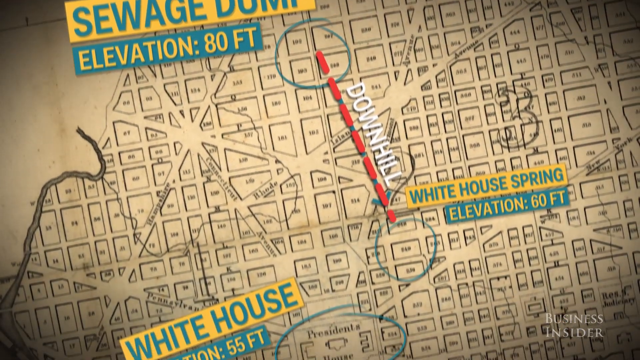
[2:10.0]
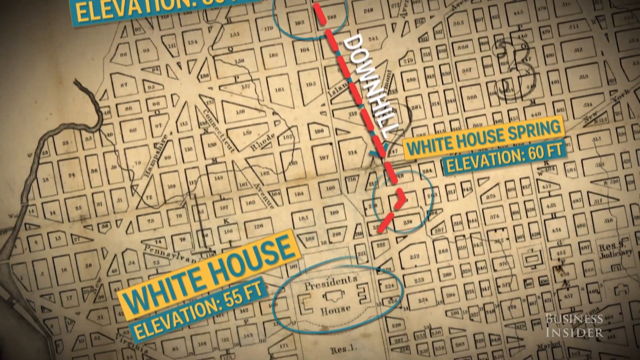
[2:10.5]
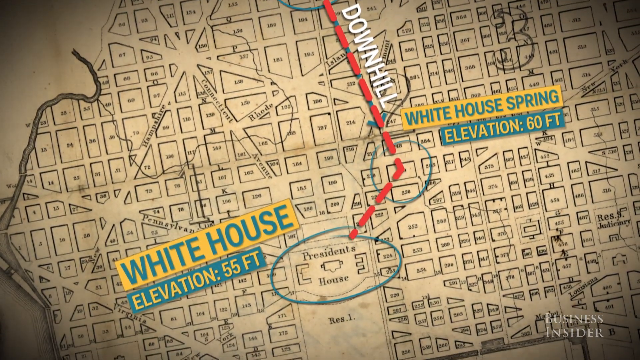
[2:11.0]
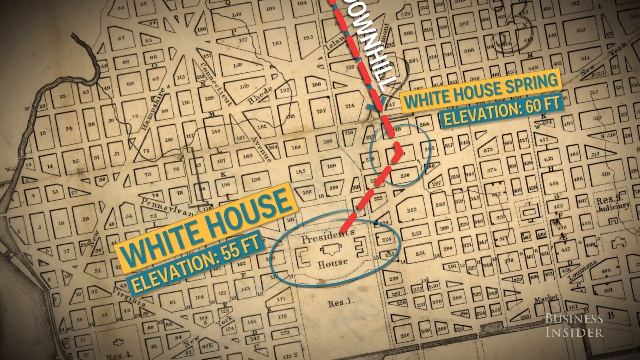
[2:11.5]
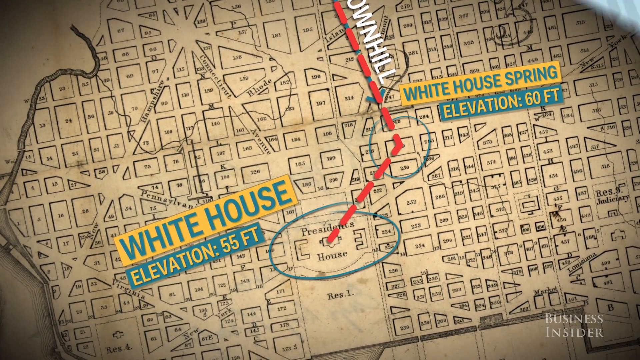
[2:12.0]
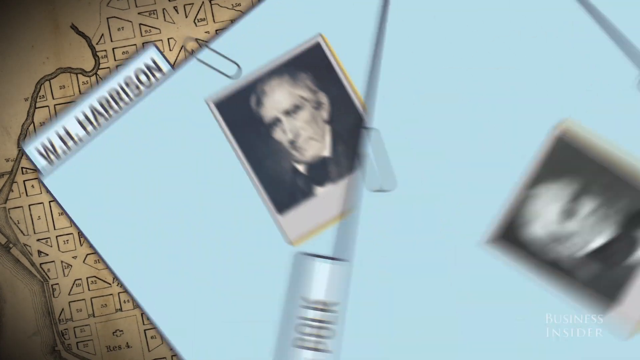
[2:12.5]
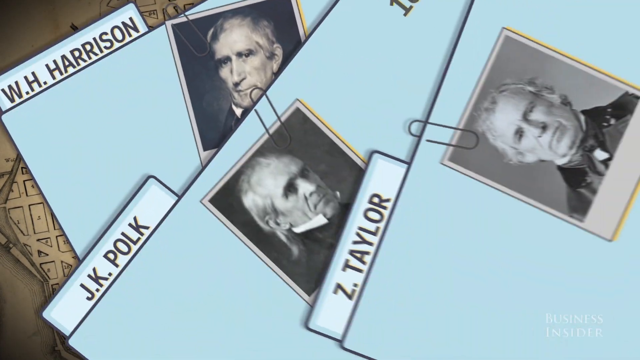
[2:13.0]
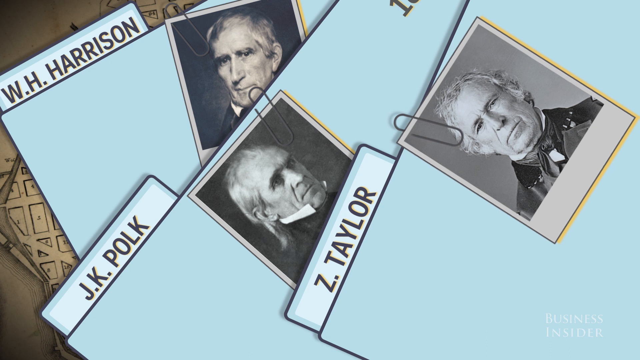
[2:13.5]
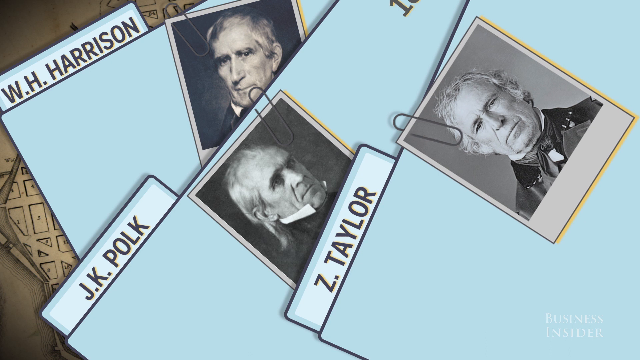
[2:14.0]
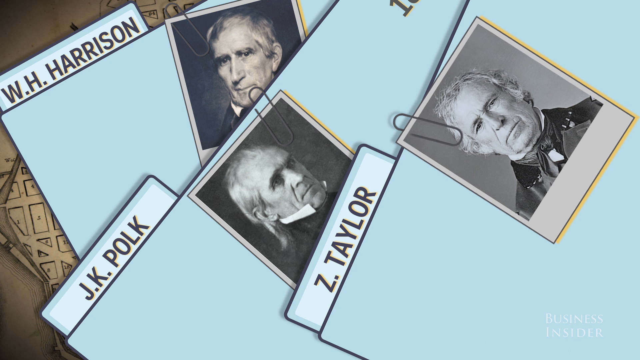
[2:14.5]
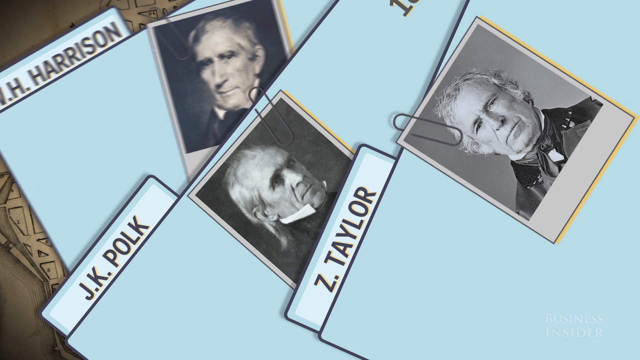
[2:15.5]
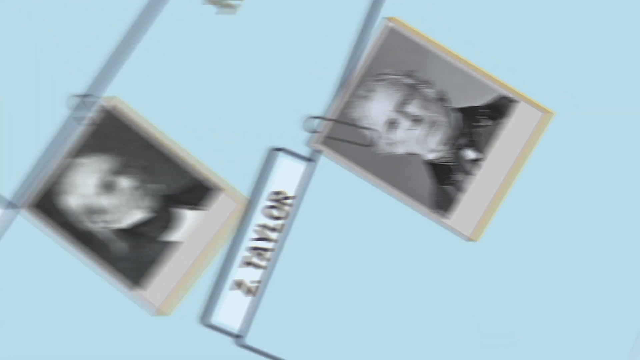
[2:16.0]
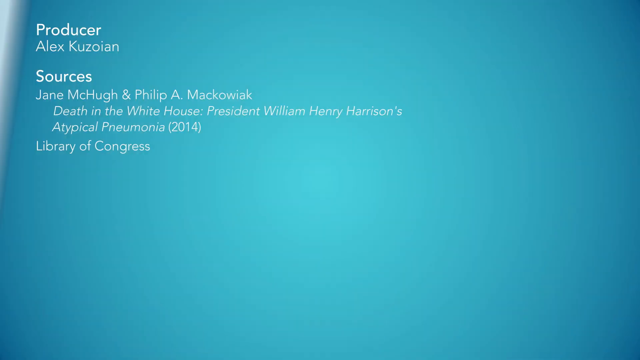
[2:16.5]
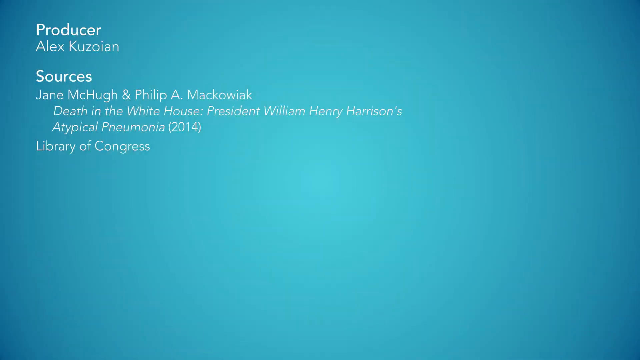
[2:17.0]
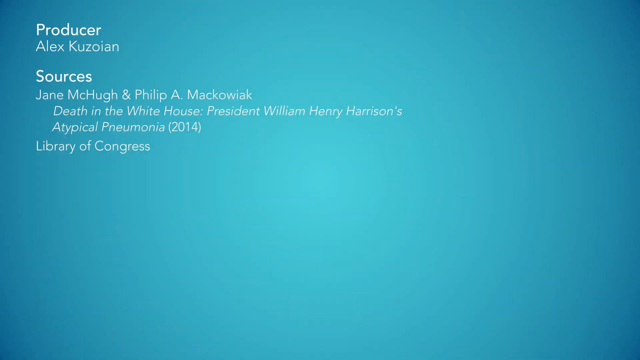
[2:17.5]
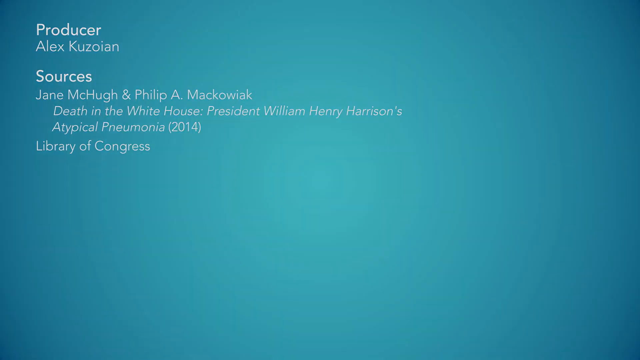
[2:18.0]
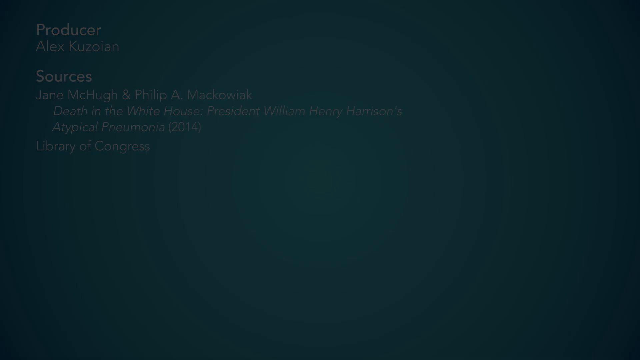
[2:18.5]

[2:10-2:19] The video shows how the sewage came down towards the White House. It then shows the three presidents, W.H. Harrison, J.K. Polk, and Z. Taylor, depicted as black and white Polaroids paper-clipped to blue folders. The video ends with the credits: at the very top left-hand corner it reads "Producer Alex Kuzoan," and under that "Sources Jane McHugh and Philip A. McEwiack." The title "Death White House, President William Henry Harrison's Atypical Pneumonia, 2014" is listed, and under that "Library of Congress."